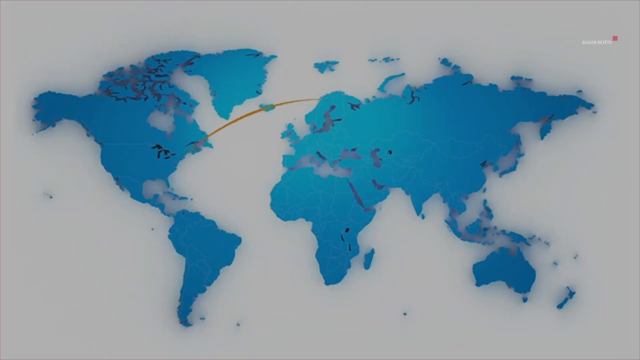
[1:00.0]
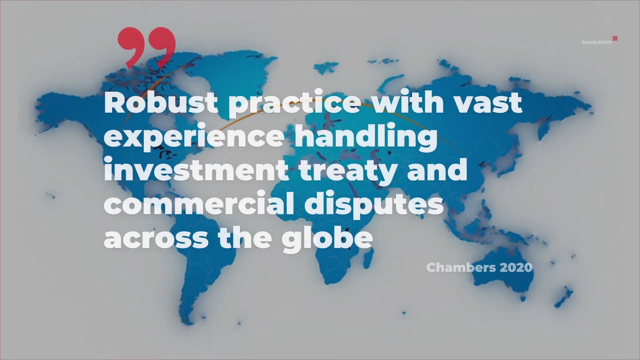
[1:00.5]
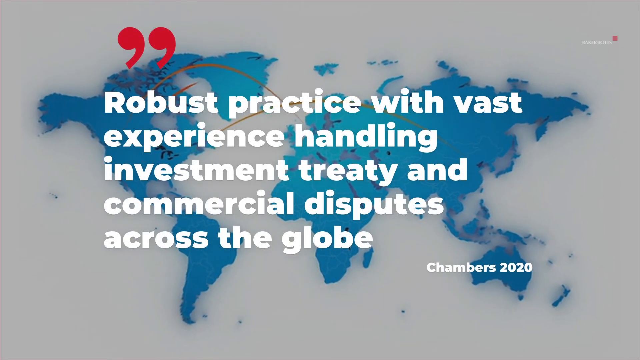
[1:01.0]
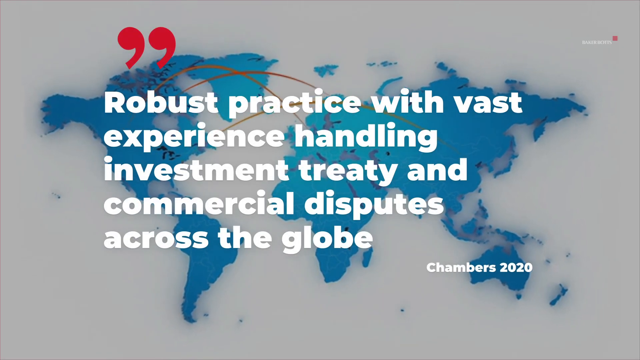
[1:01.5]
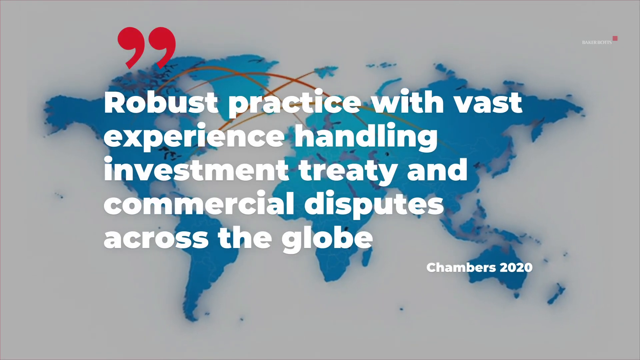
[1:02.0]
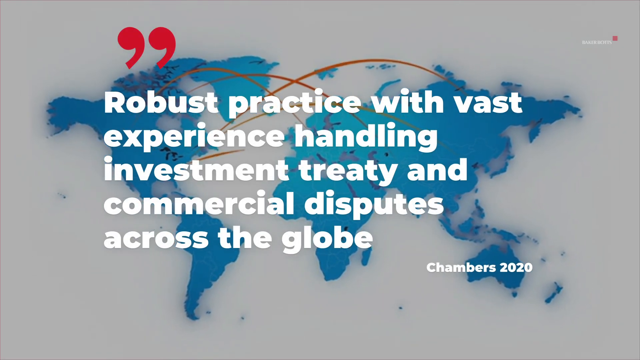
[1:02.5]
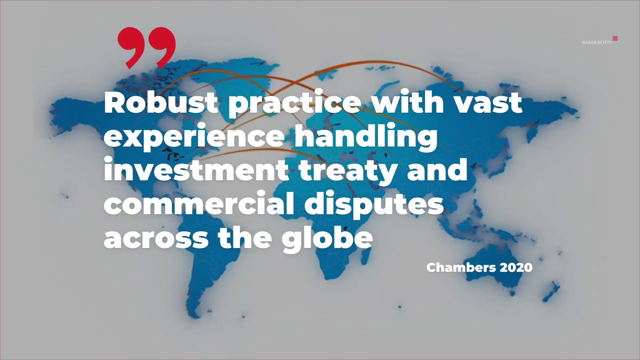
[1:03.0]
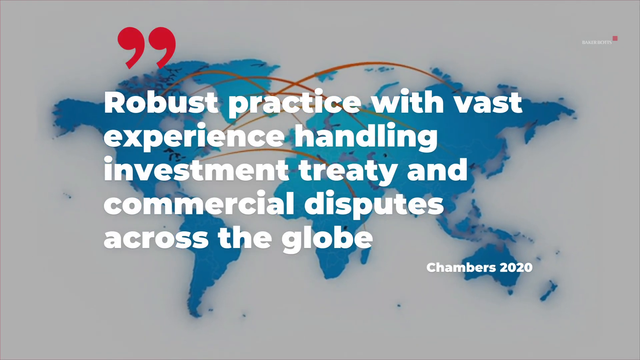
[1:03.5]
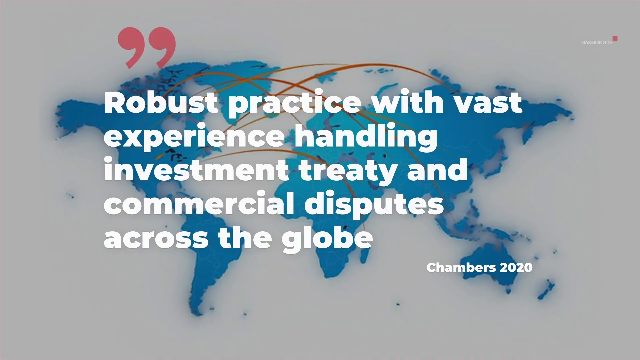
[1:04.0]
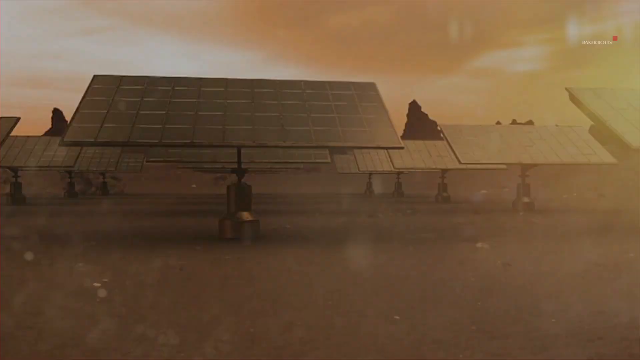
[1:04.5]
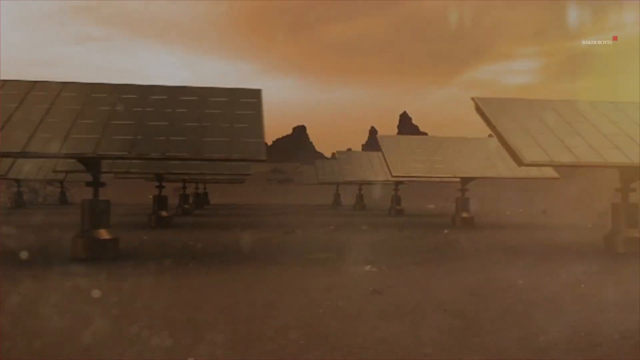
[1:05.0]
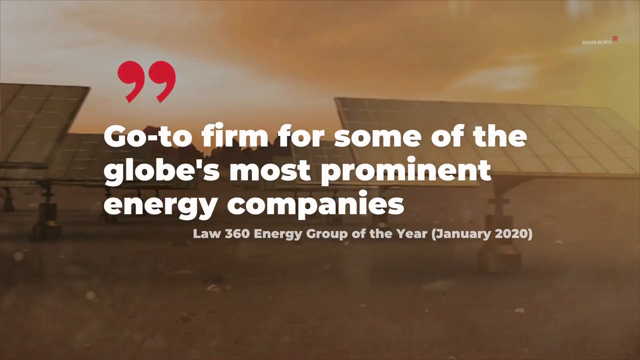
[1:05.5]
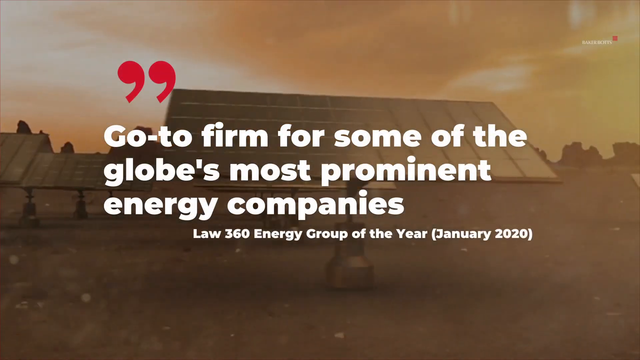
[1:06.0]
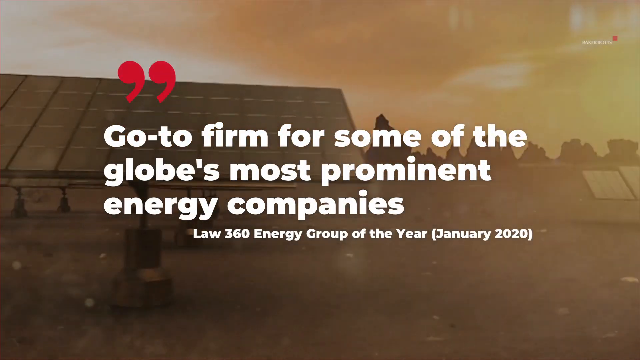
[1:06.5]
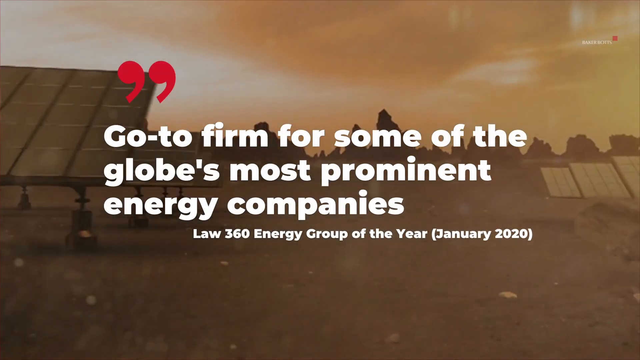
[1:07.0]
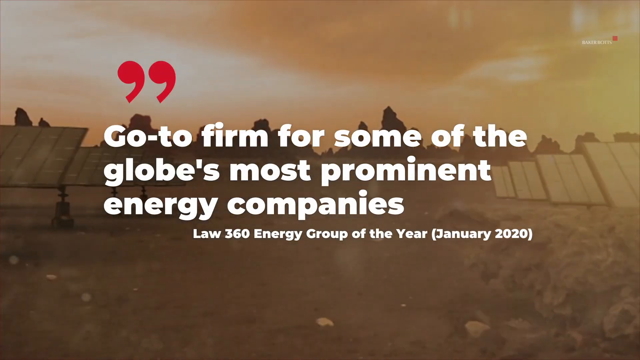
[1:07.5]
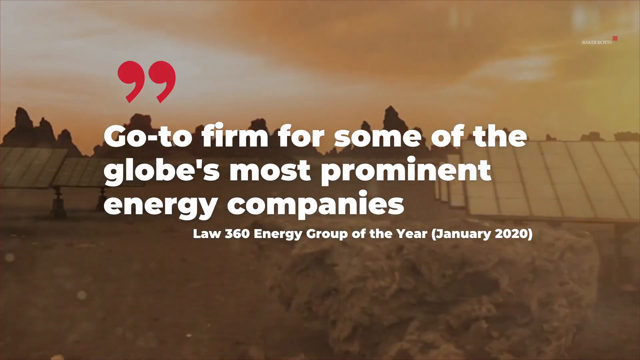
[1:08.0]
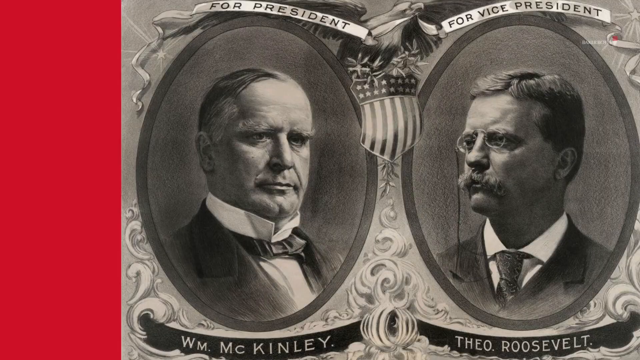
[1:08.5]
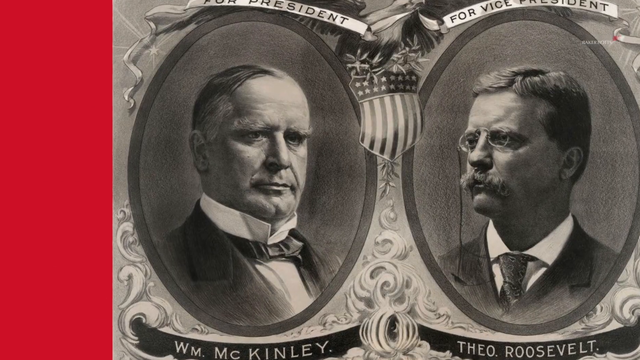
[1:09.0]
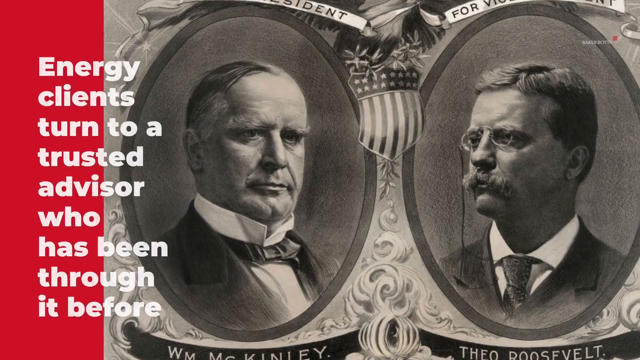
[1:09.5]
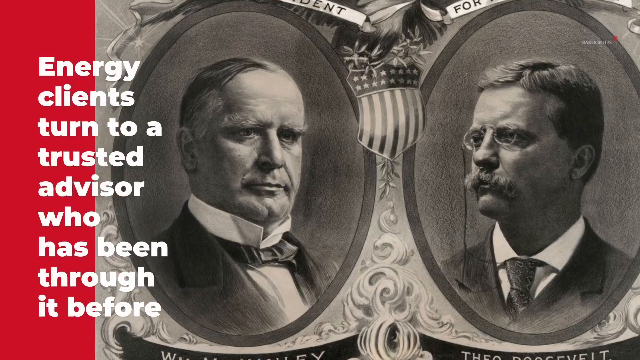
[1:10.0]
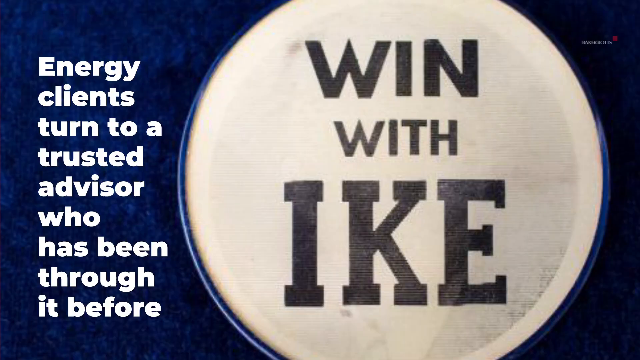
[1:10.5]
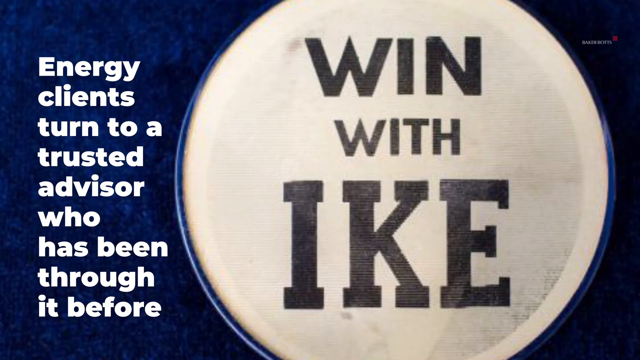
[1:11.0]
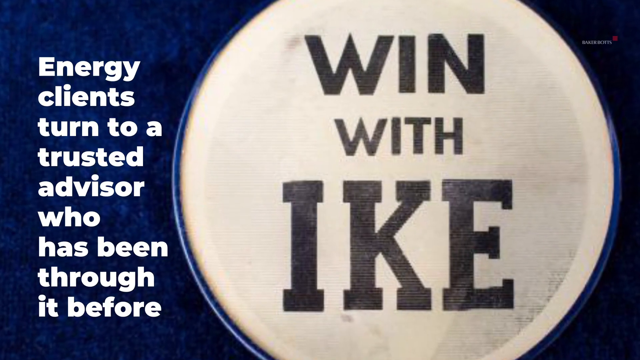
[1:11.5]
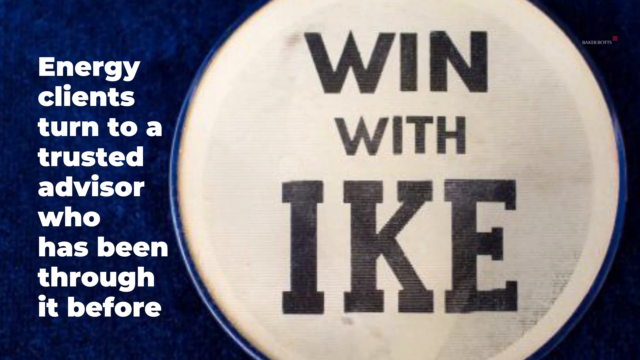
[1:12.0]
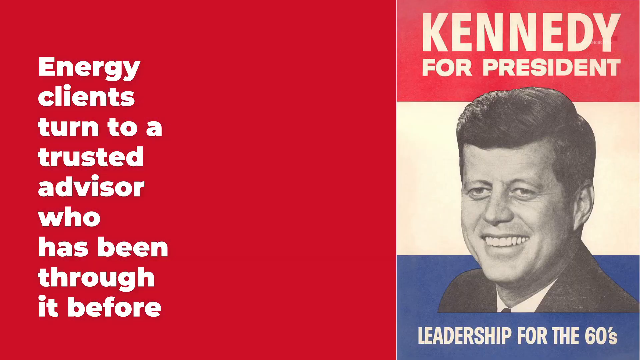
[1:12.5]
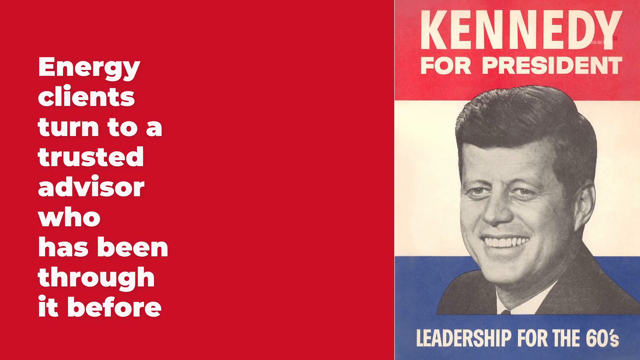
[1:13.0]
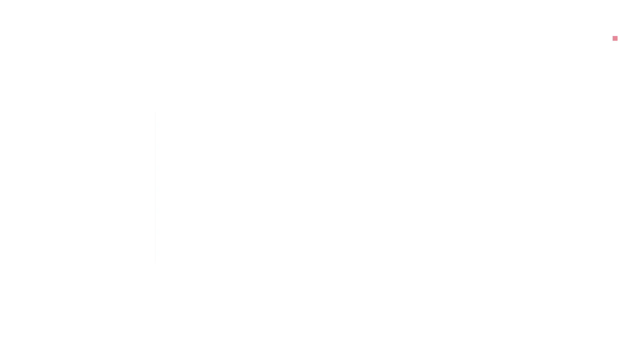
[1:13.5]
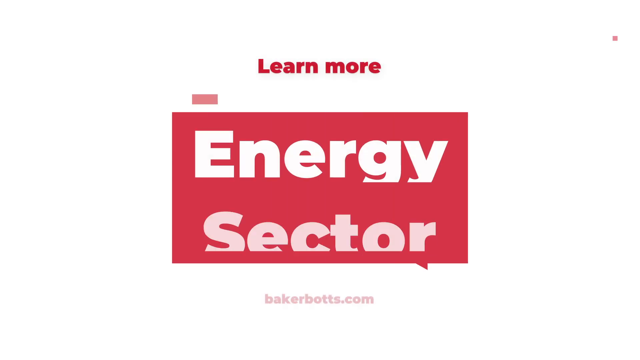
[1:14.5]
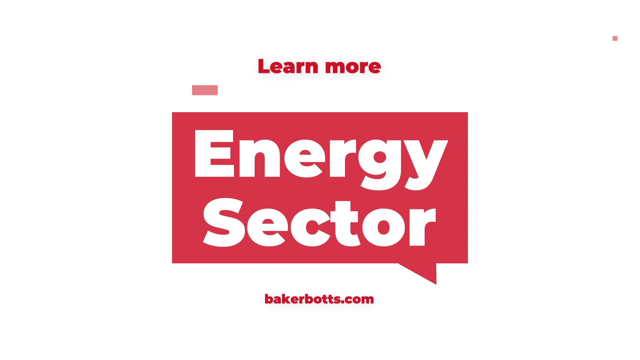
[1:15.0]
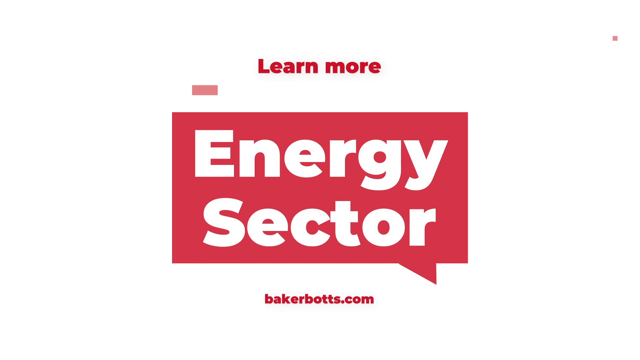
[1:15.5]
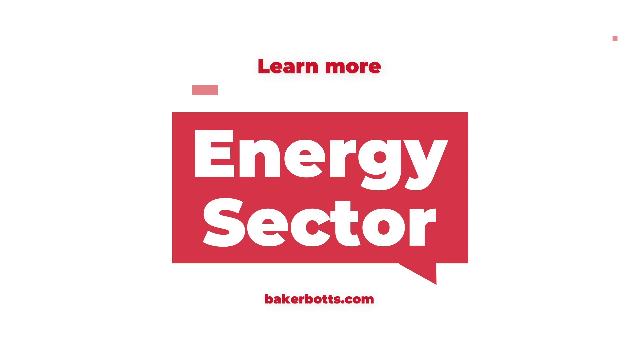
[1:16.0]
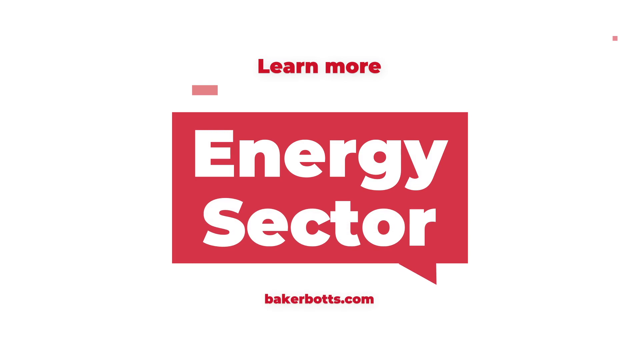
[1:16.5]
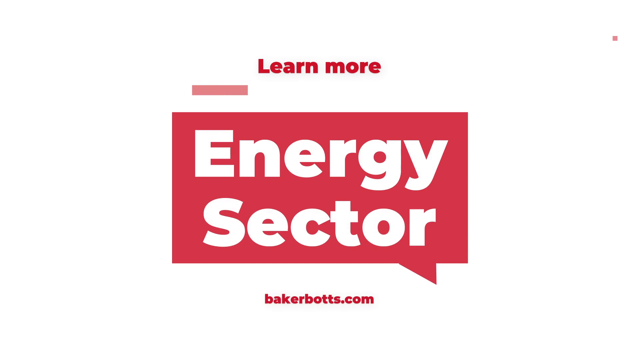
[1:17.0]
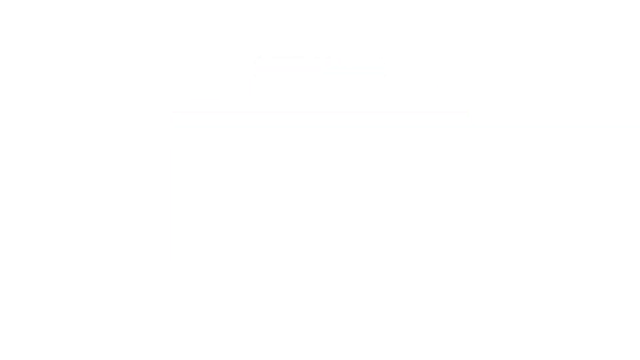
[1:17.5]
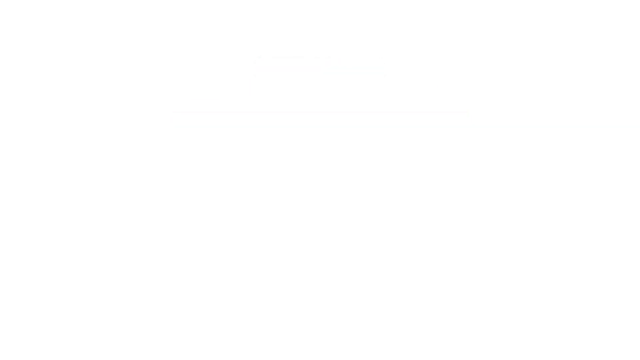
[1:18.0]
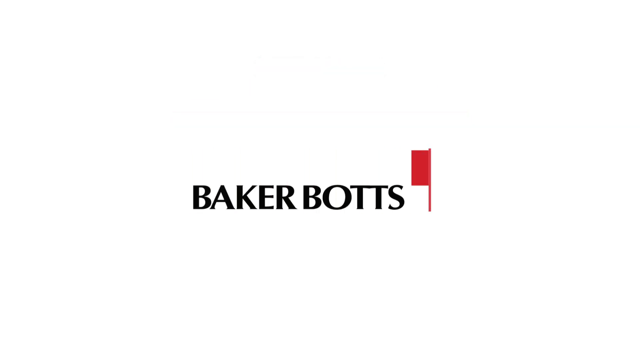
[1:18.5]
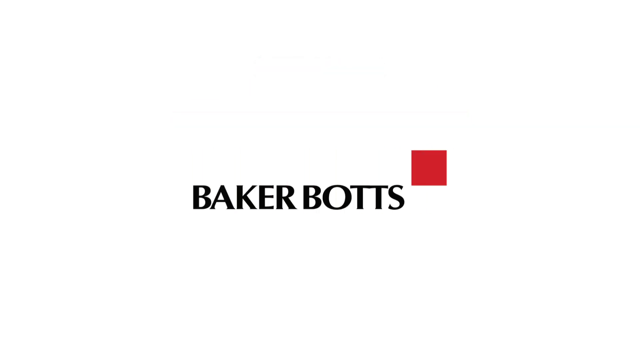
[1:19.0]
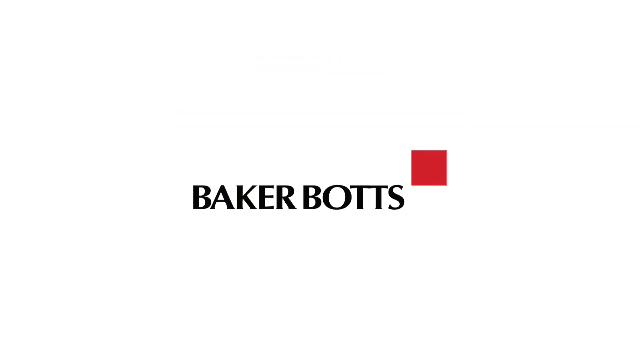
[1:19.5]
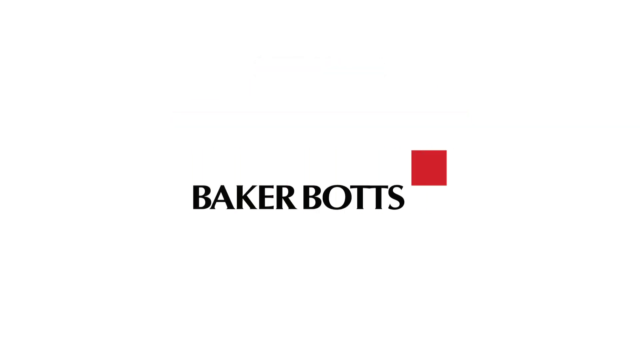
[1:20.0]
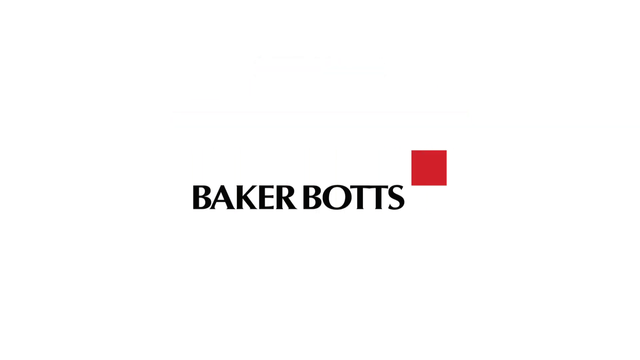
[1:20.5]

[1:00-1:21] Text reads "robust practice with vast experience handling investment treaty and commercial disputes across the globe" over a picture of the world in map format. A solar farm shot follows, moving very quickly, with the message "go to firm for some of the globe's most prominent energy companies, lot 360 energy group of the year, January, 2020." Then a picture of William McKinley and Teddy Roosevelt appears, and the message says "energy clients turn to a trusted advisor who has been through it before." The picture changes to "win with Ike," Dwight D. Eisenhower from 1952, while the message stays, followed by Kennedy in 1960. Finally, the screen shows "energy," "learn more energy sector" and "bakerbots.com."